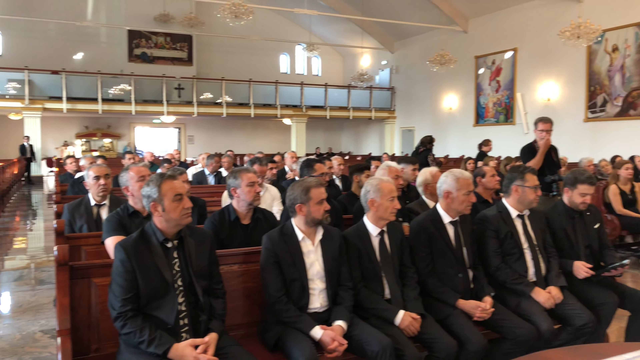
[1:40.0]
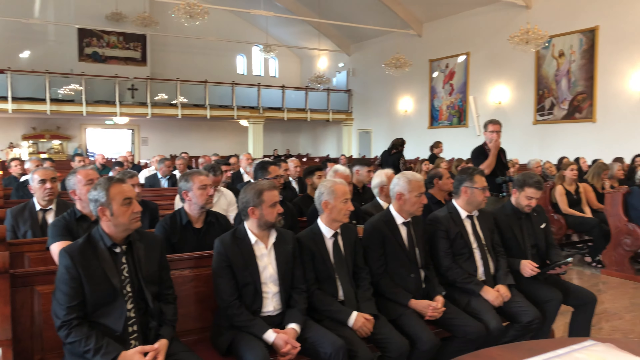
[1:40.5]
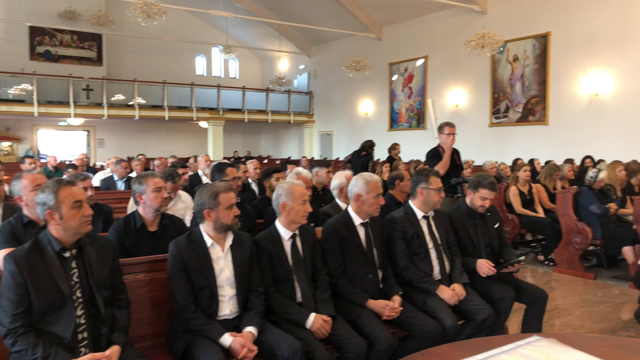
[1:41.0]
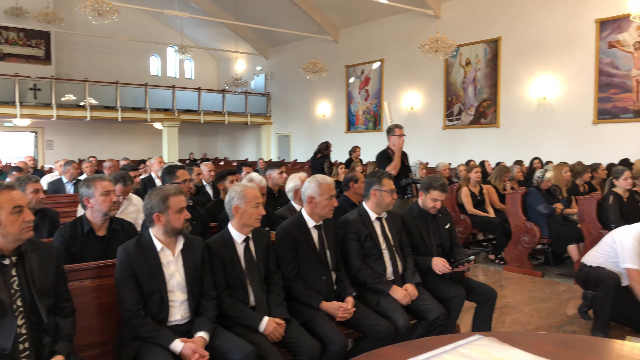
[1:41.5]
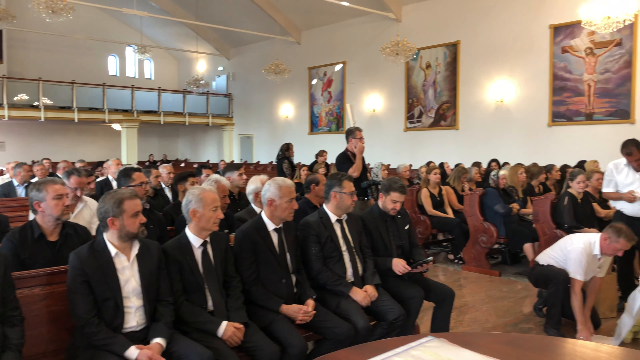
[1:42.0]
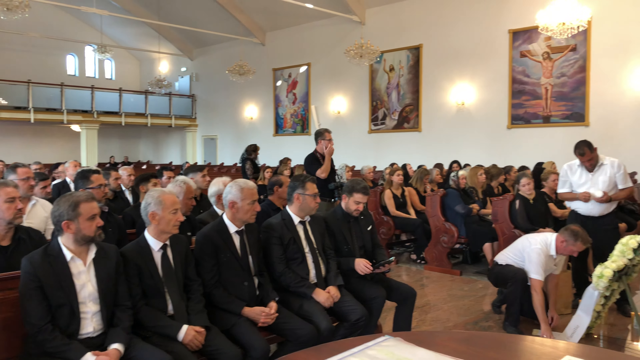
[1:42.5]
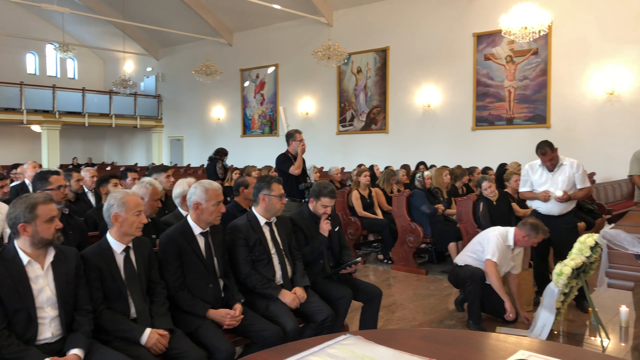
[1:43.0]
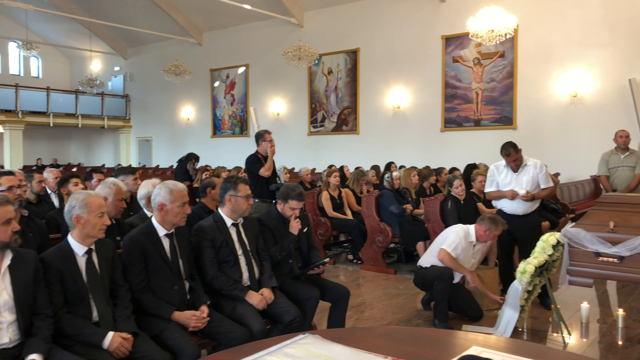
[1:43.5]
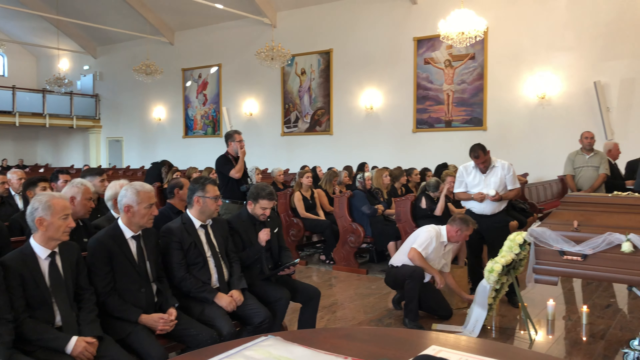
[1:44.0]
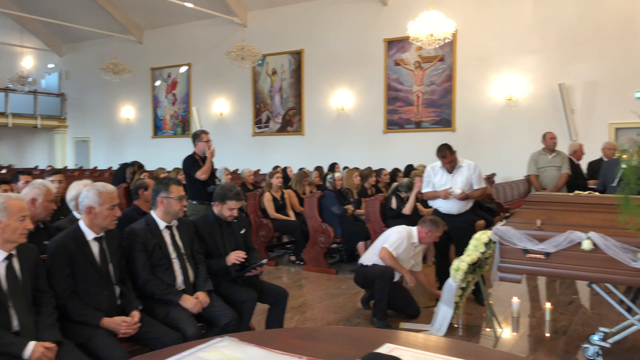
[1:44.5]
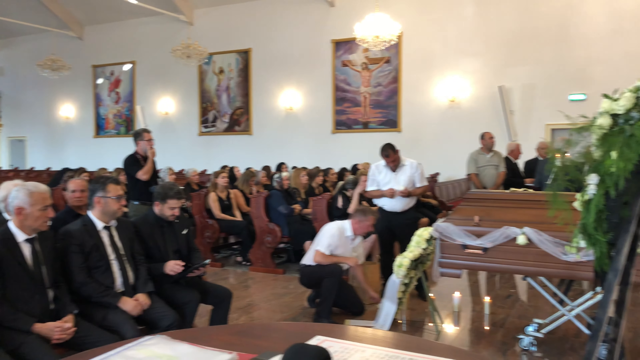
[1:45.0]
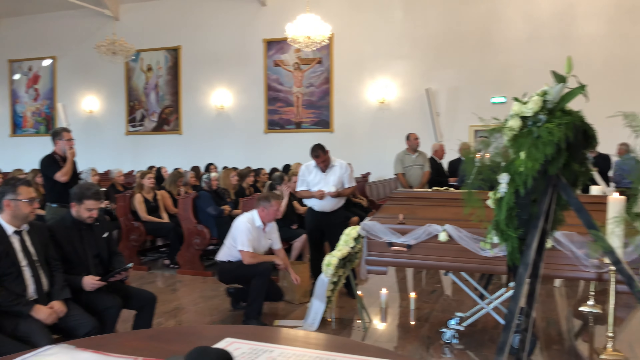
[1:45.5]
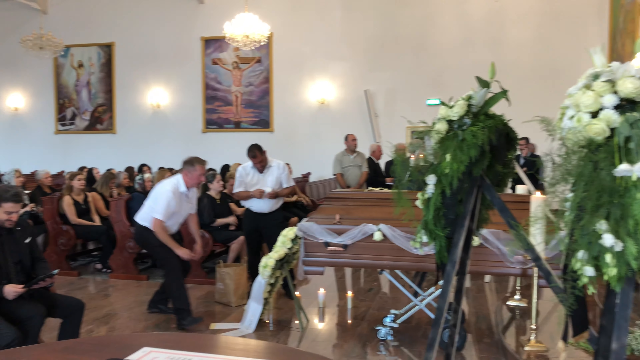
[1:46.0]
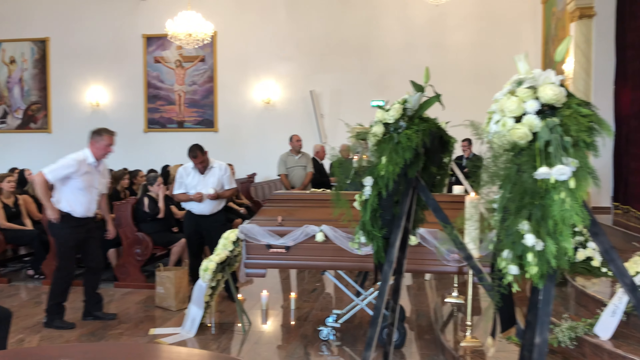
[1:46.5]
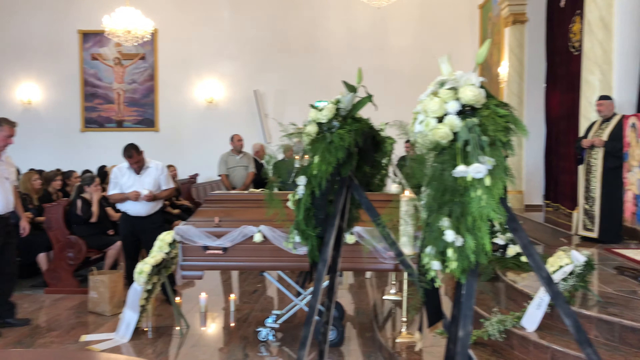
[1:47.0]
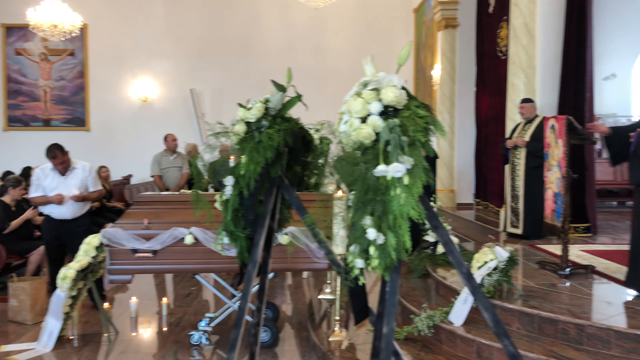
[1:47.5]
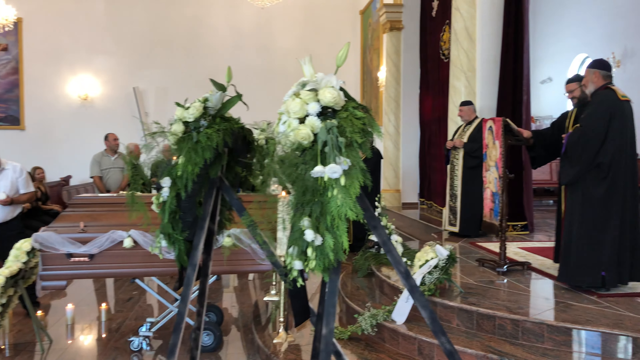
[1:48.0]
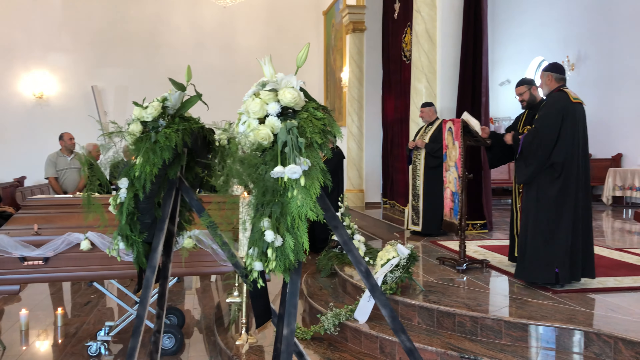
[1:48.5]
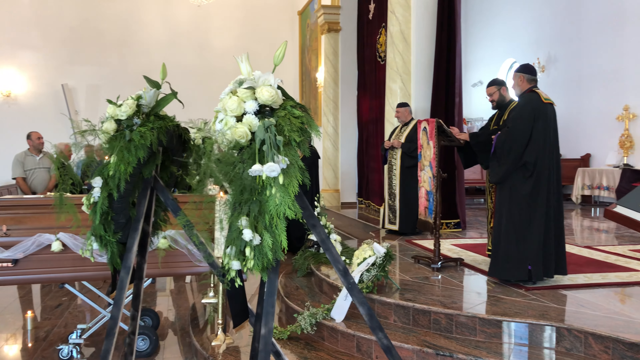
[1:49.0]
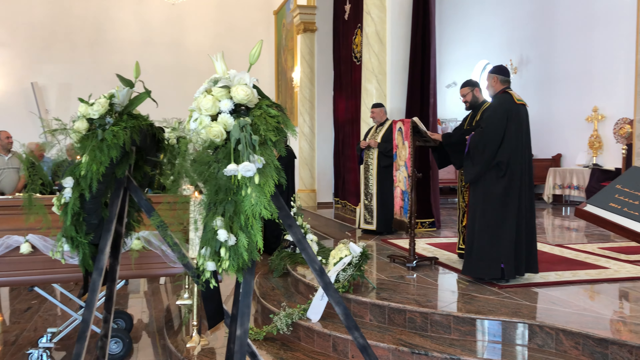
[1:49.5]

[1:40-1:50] From the front of the church, the congregation is shown, mostly wearing black. One of the cameramen is visible, along with the two men in black pants and white shirts trying to set up the flower cross in front of the casket. The camera pans to the casket, which is closed, and all of the wreaths with greenery and white flowers with black ribbons. It continues around to show the clergy standing at the front. One man is in front of a podium turning pages; he appears to be getting papers ready for some kind of speech and will most likely be the one speaking at the funeral. Two men stand near the podium, and one clergyman stands farther away to the side, maybe 15 feet from the other two.